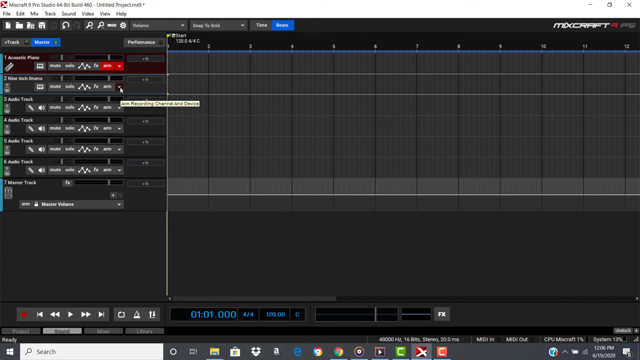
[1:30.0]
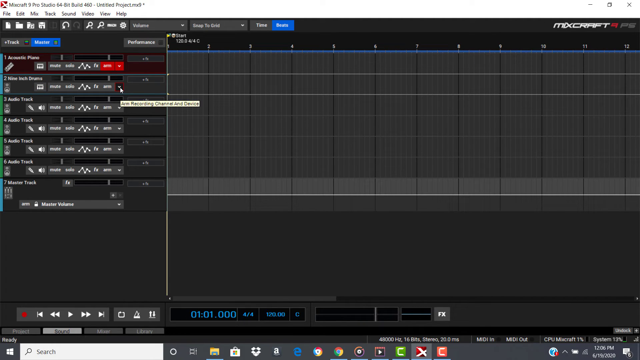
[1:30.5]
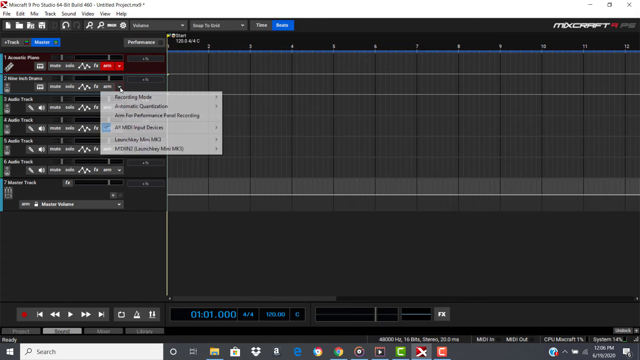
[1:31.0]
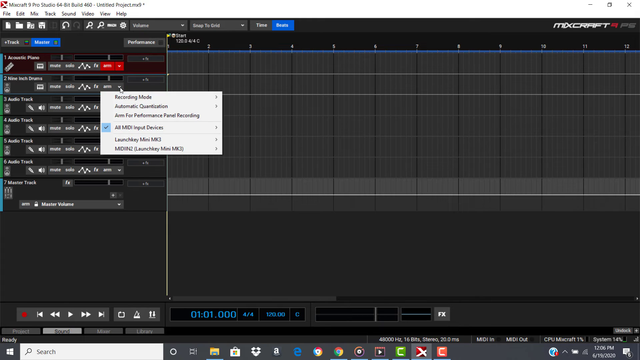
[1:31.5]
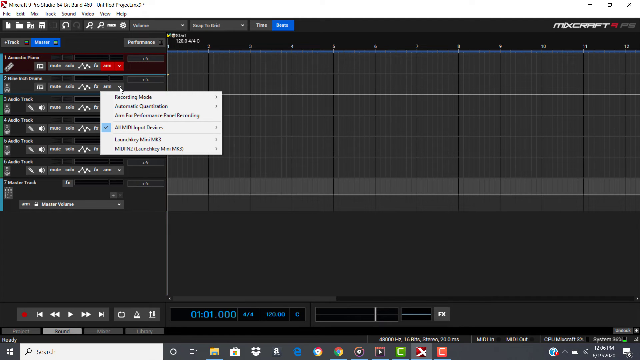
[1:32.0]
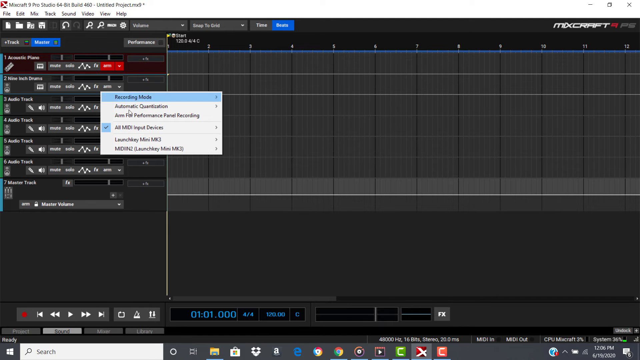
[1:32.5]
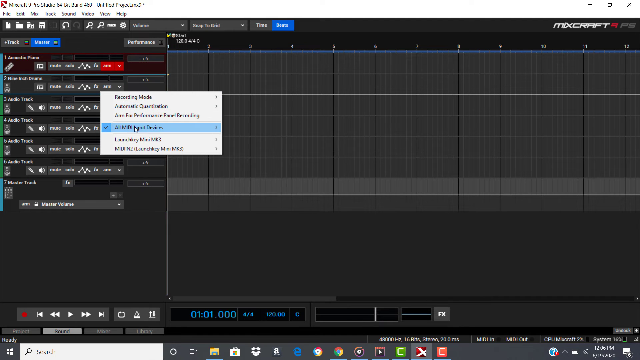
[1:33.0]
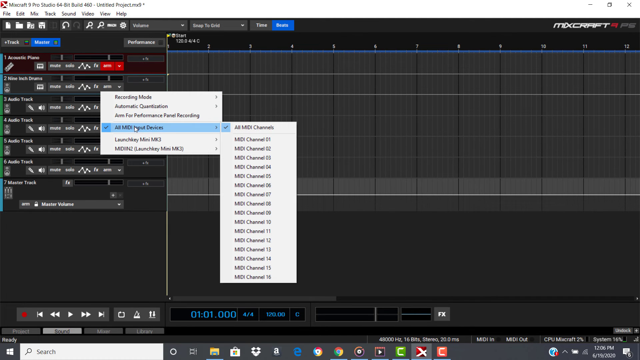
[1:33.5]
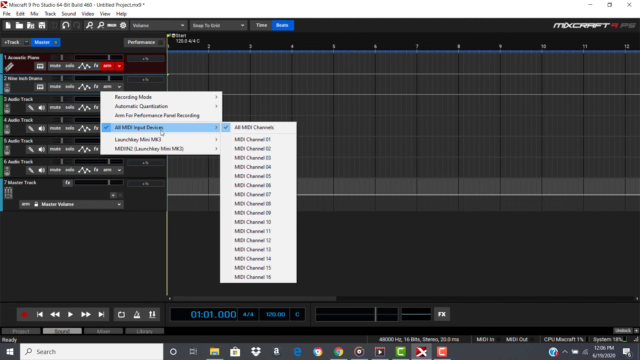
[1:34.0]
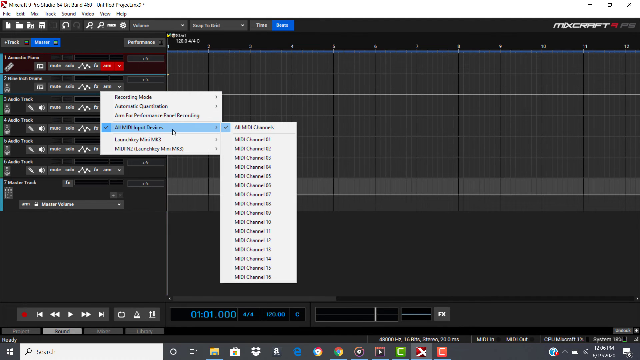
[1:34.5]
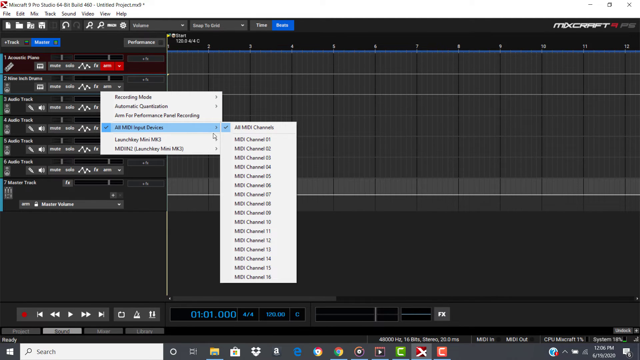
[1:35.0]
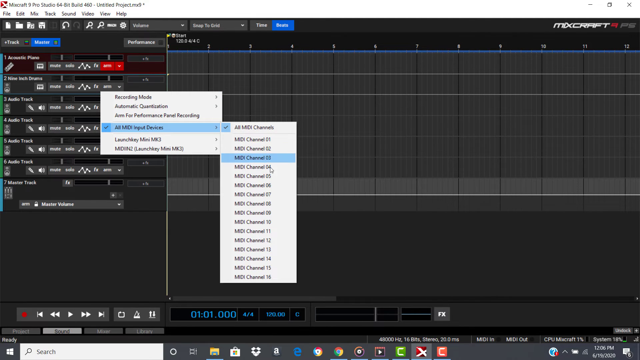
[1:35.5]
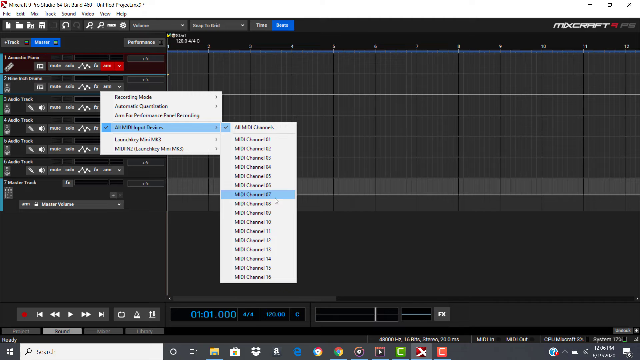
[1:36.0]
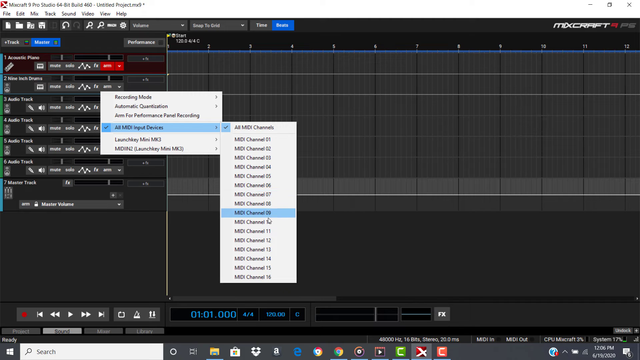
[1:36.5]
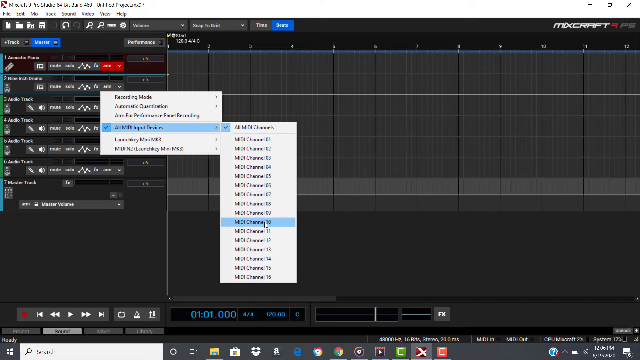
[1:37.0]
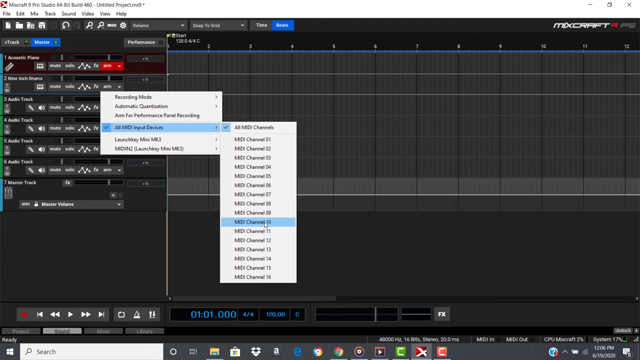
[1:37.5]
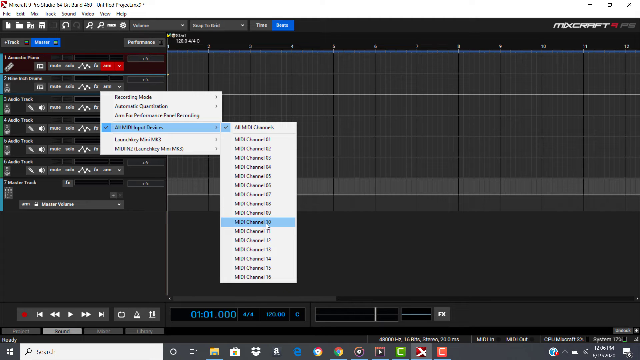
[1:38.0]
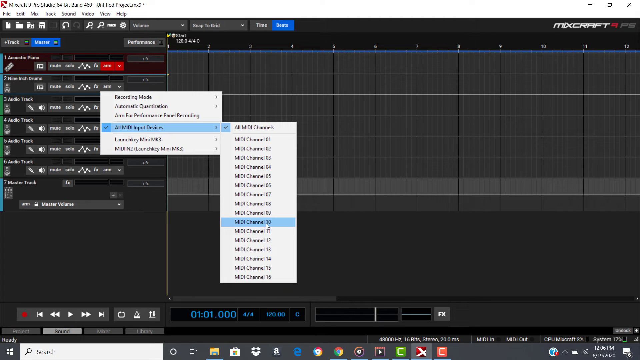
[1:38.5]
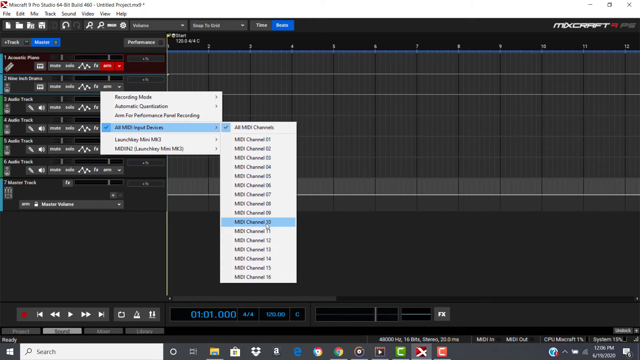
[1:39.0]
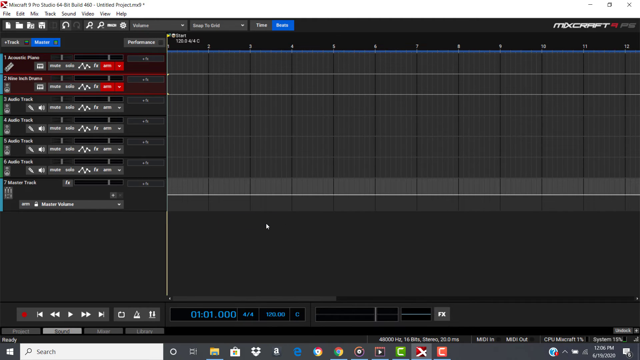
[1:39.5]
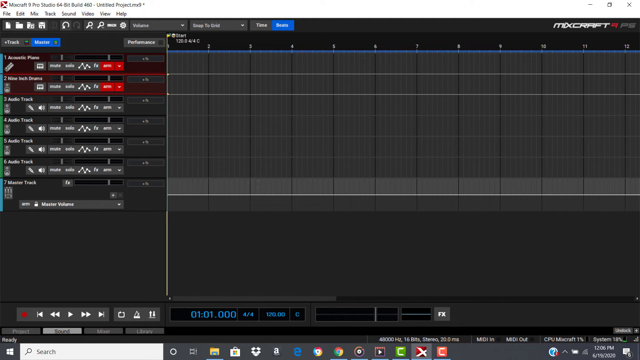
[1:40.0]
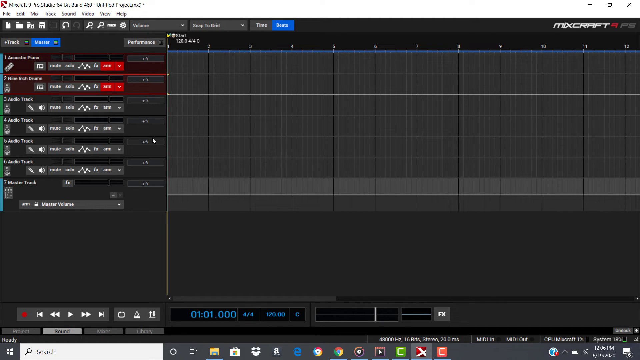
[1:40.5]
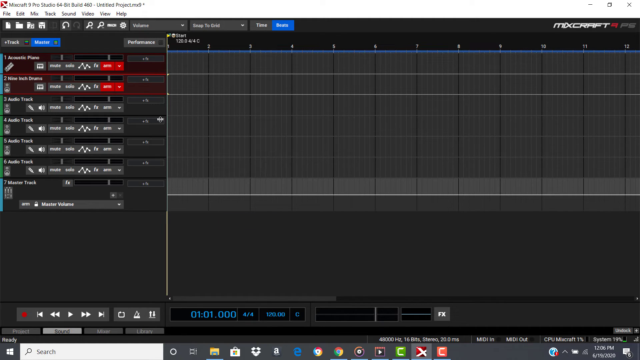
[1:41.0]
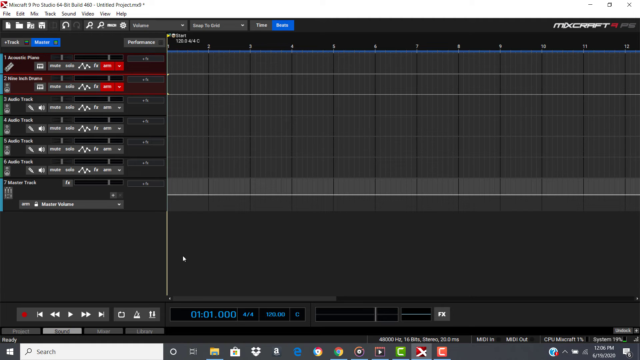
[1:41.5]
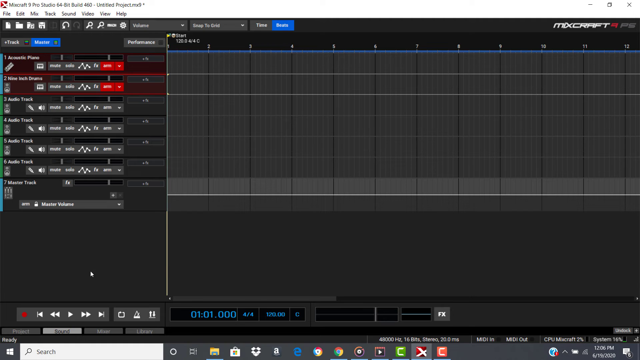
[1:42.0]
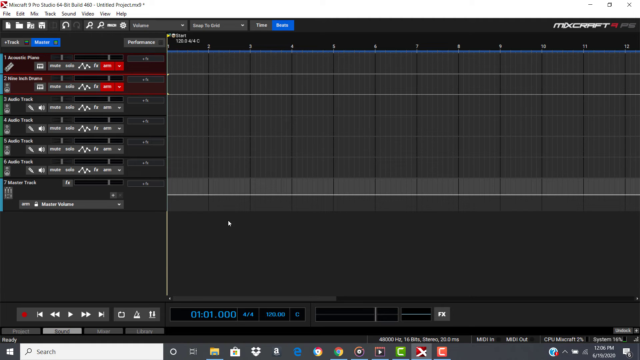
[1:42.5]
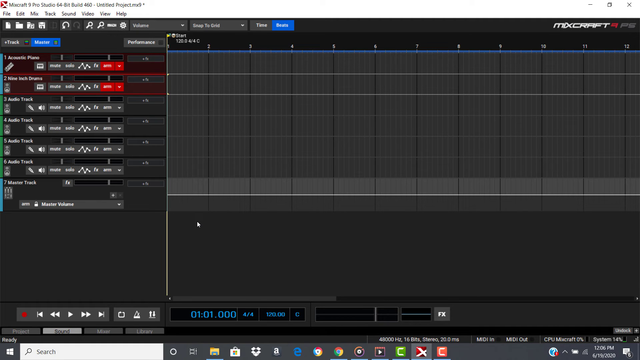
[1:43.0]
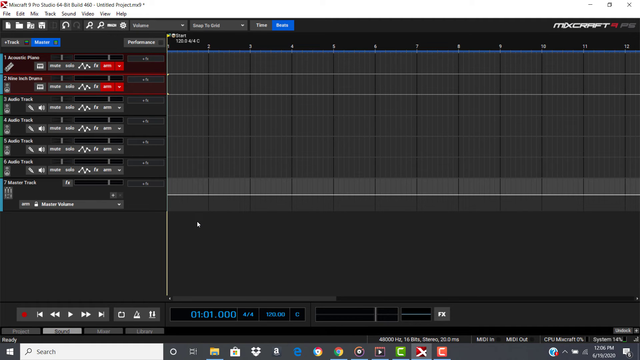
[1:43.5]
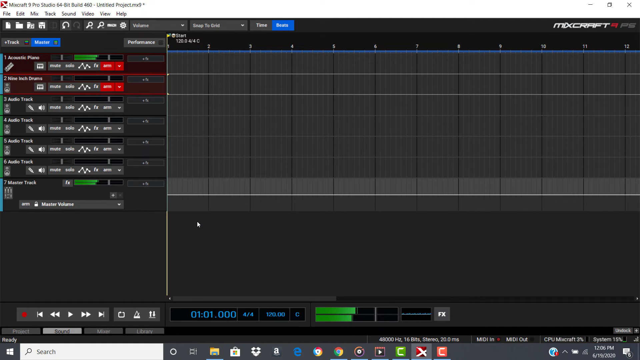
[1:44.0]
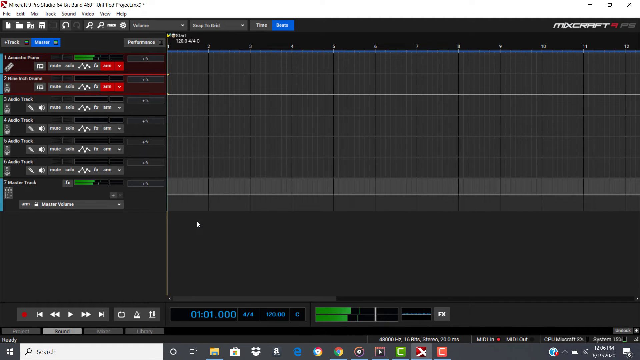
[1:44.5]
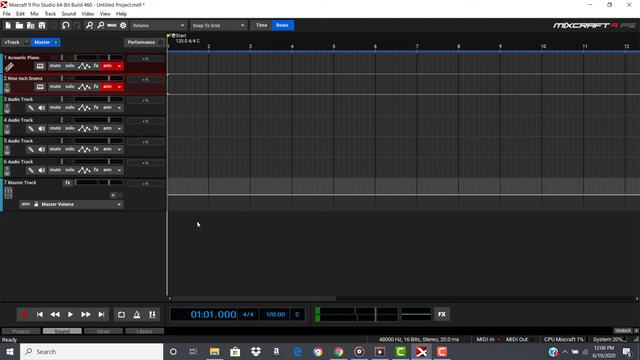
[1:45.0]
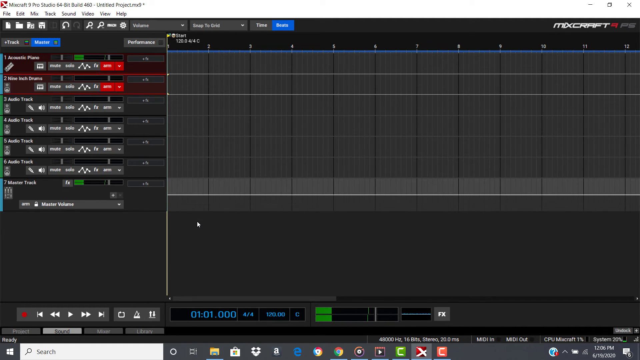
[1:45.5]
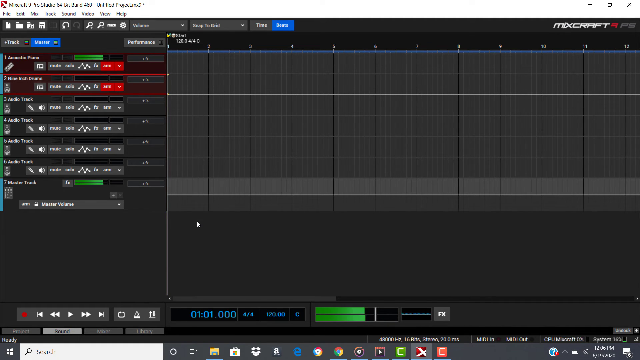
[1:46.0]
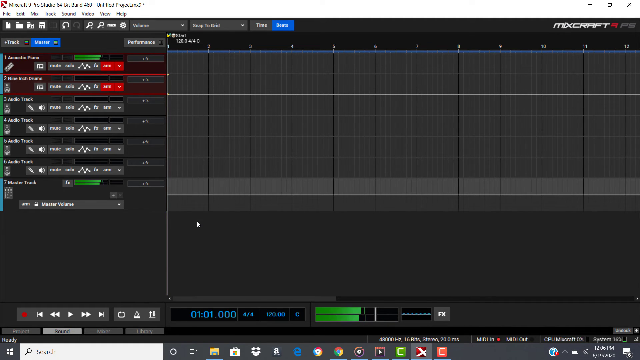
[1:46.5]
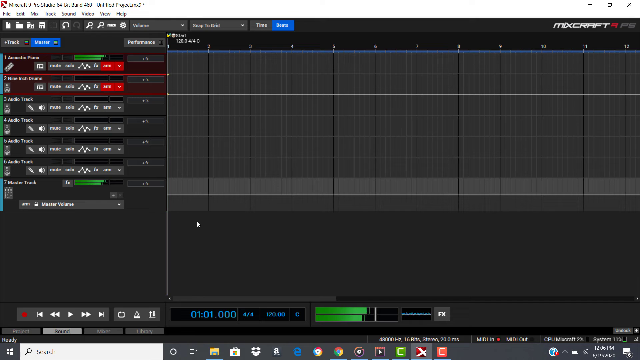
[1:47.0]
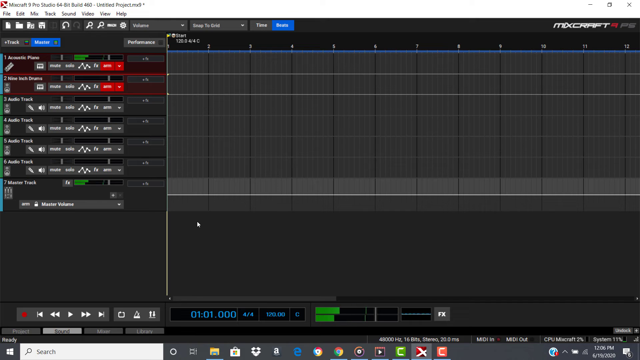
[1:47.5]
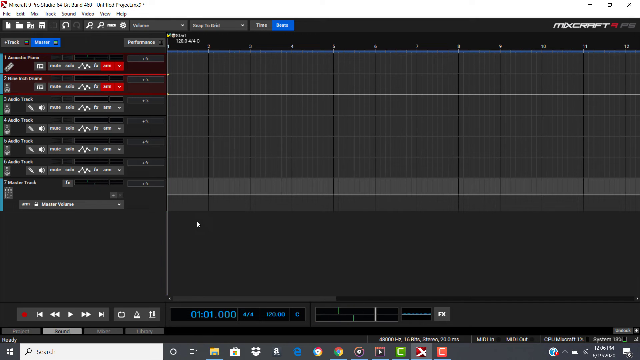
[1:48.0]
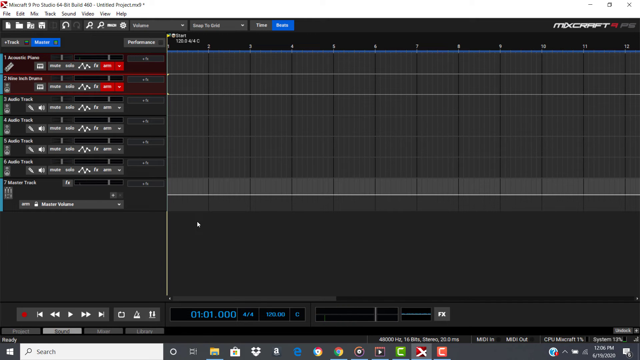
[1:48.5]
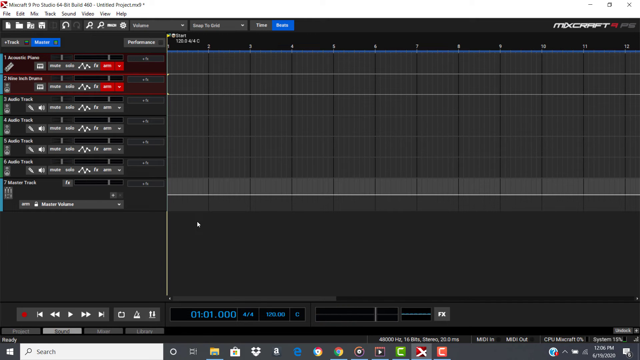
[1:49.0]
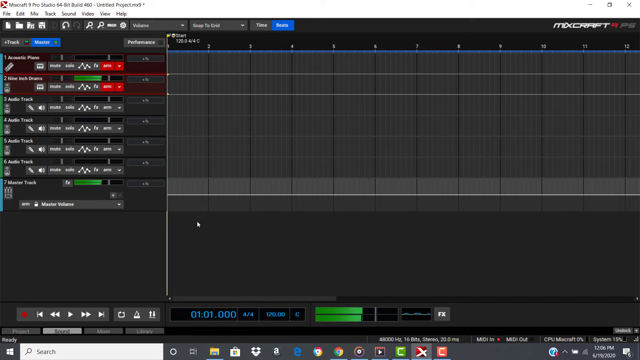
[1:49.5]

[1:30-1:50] Someone's laptop or computer screen shows the upper right corner saying "MixCraft". On the left side, columns 1, 2, 3, 4, 5, 6, 7 are labeled with different names; number one is "Acoustic Piano" and further down is "Audio Track". The mouse cursor is on number two and clicks one of the icons under it, which opens a box. The cursor goes down a few rows and clicks, producing a blue highlight, and another box opens. The mouse is kind of dragged over to that other box, goes all the way down, and chooses channel 30, several options down. That box disappears, and horizontal green bars start blipping left to right as though music is playing.